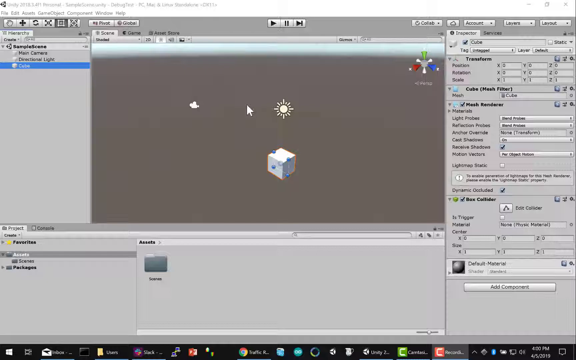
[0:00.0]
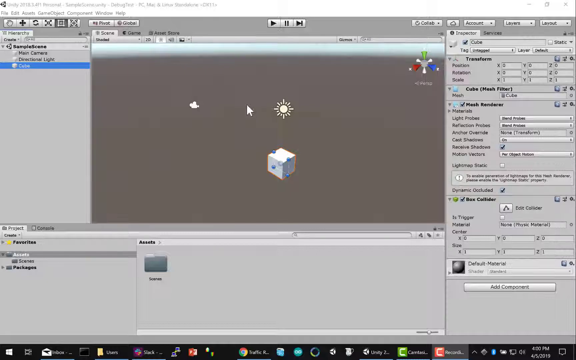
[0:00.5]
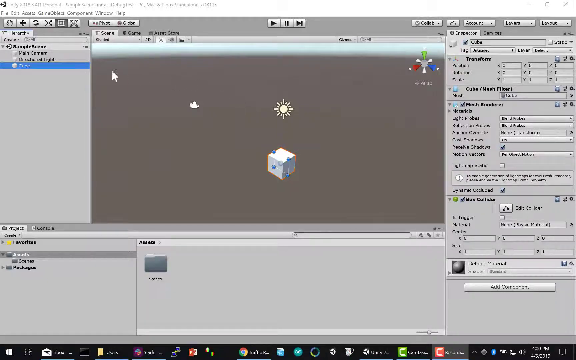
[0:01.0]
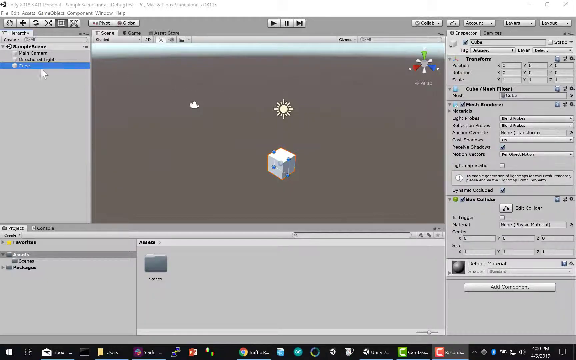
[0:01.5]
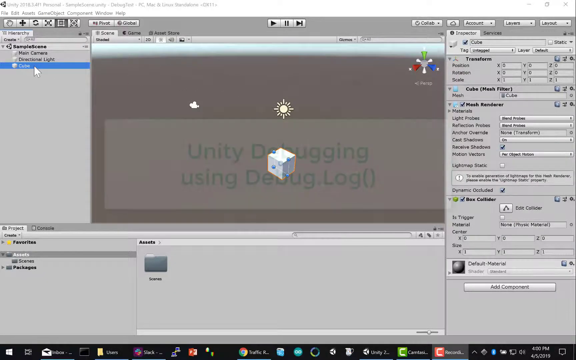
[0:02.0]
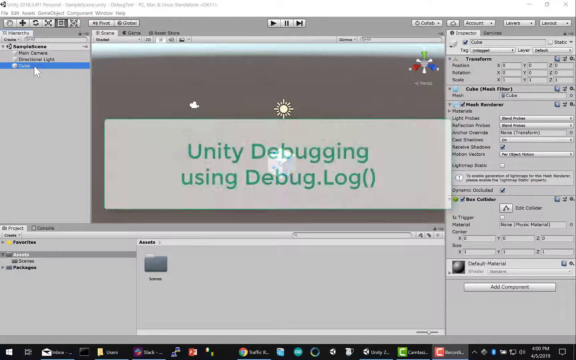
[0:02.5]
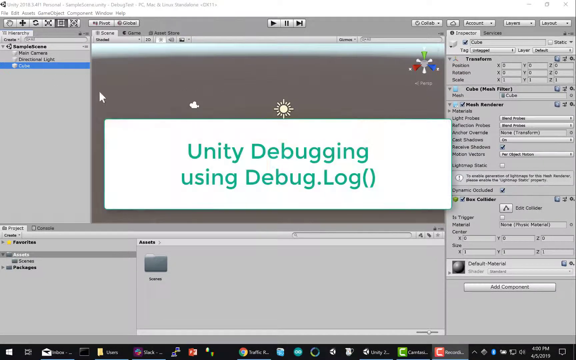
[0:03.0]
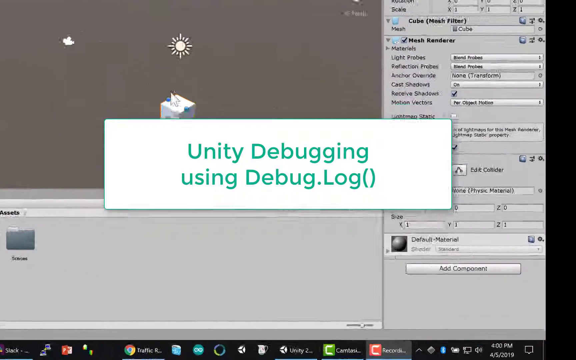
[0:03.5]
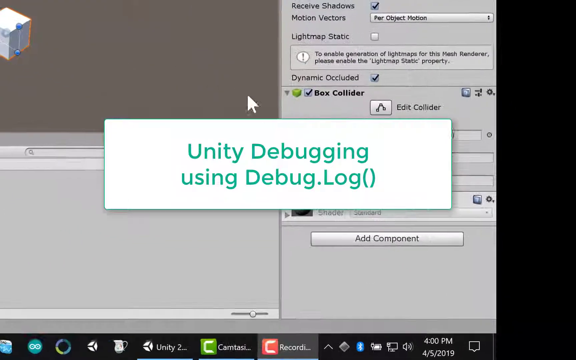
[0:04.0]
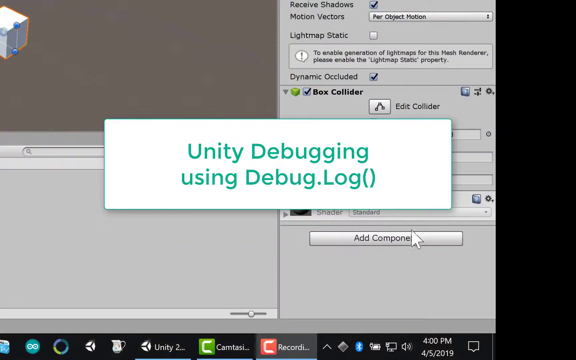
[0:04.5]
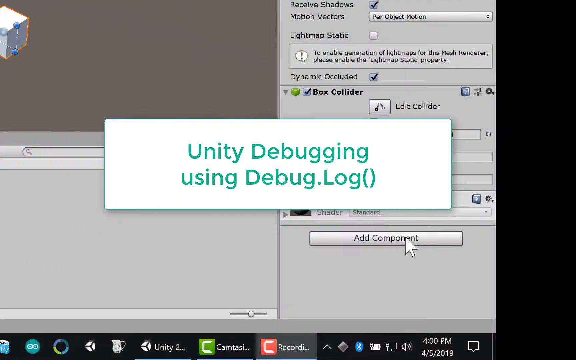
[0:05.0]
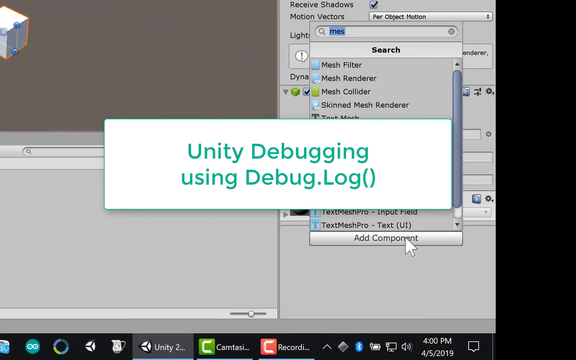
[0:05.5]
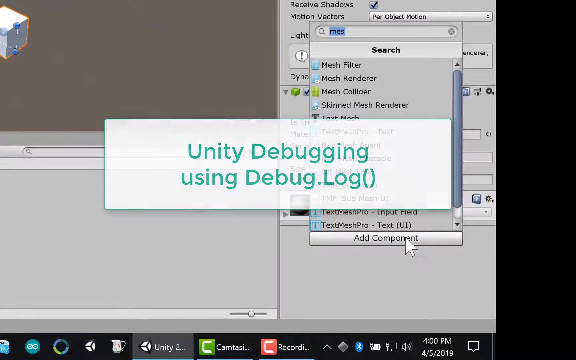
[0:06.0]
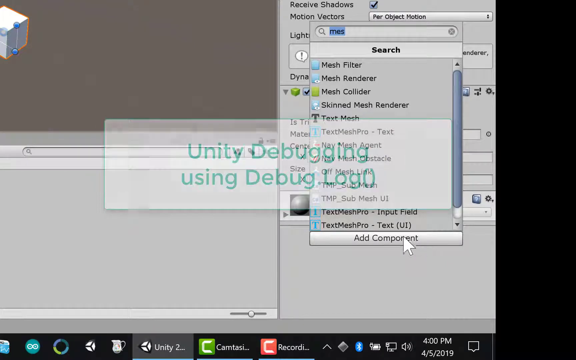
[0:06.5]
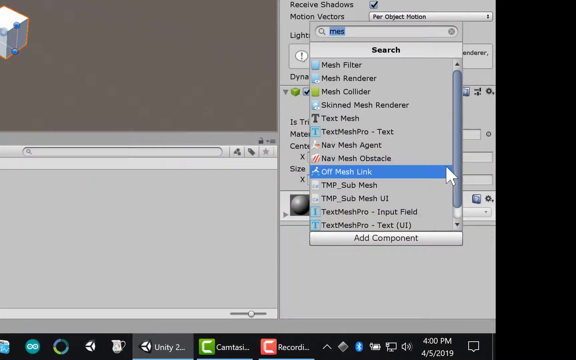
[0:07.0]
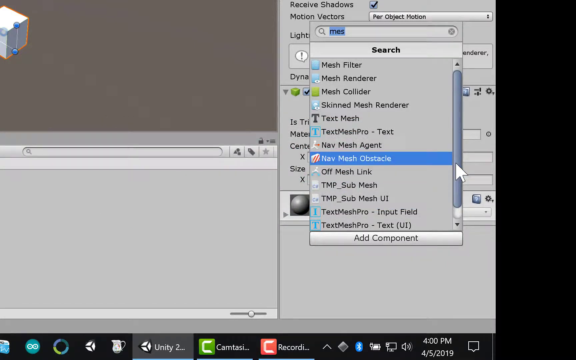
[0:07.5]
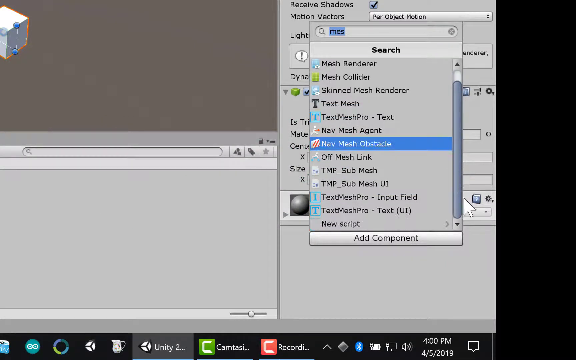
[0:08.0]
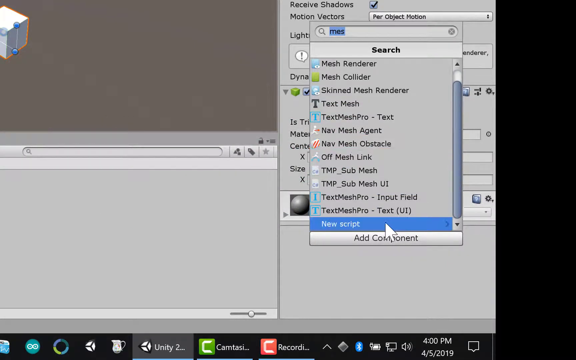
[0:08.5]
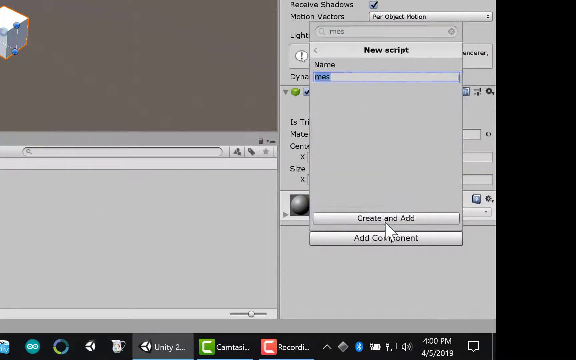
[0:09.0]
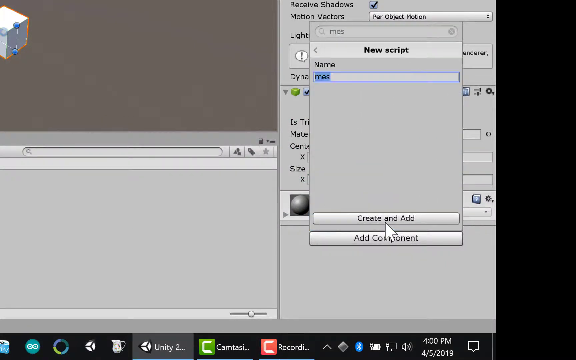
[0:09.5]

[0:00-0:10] A computer screen full of icons and items is shown. The person clicks on an icon and the text "Unity debugging using debug.log" appears. The icon seems to indicate a virus. When they click on a certain item, nothing changes on the screen.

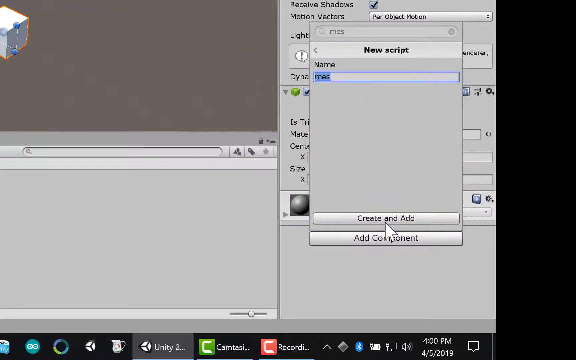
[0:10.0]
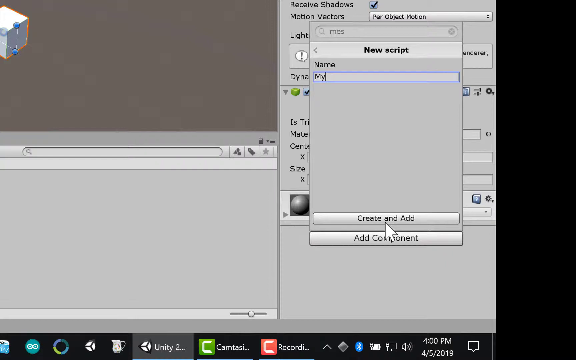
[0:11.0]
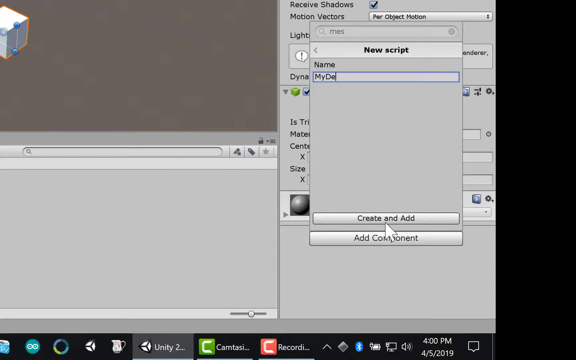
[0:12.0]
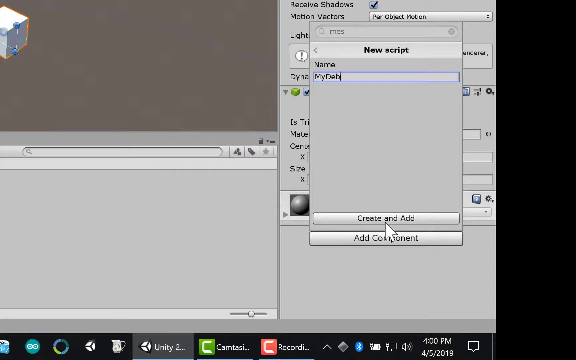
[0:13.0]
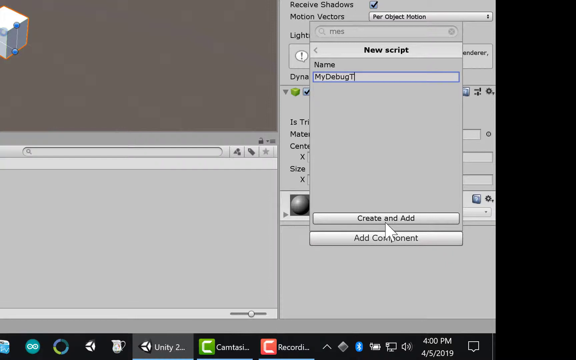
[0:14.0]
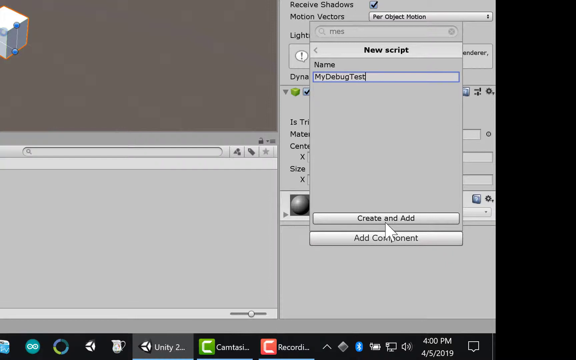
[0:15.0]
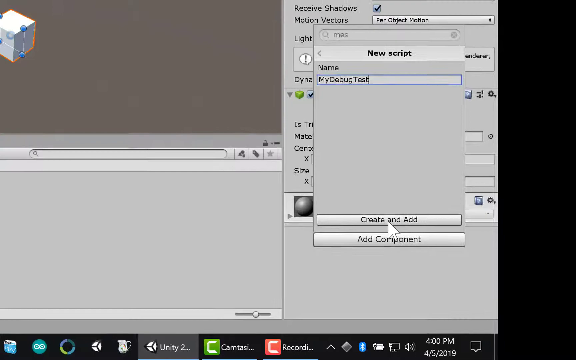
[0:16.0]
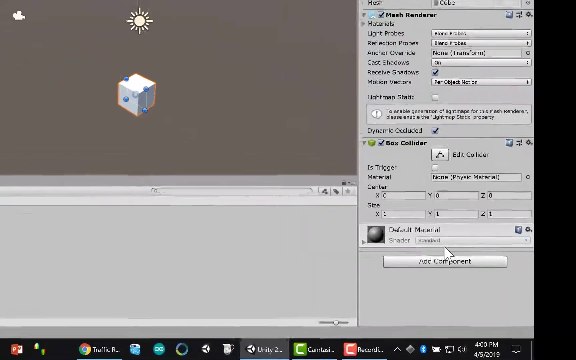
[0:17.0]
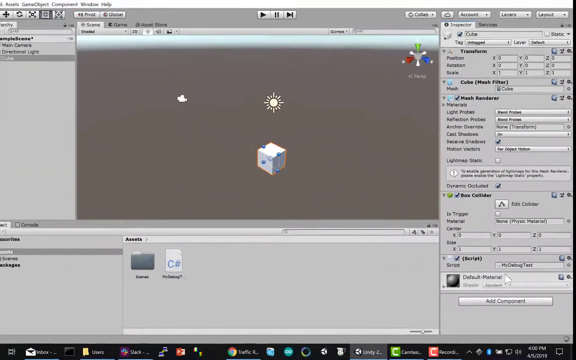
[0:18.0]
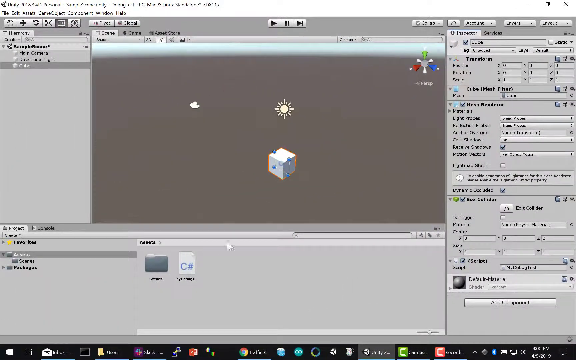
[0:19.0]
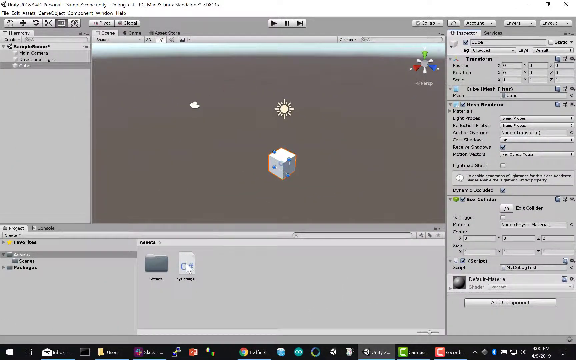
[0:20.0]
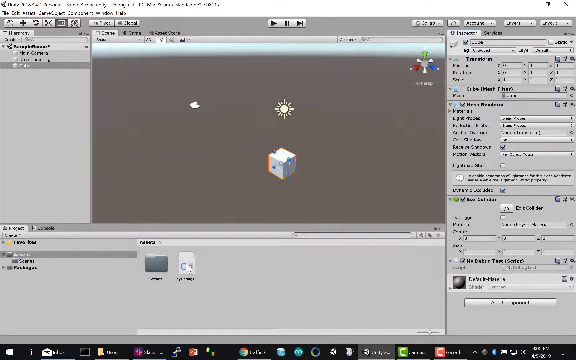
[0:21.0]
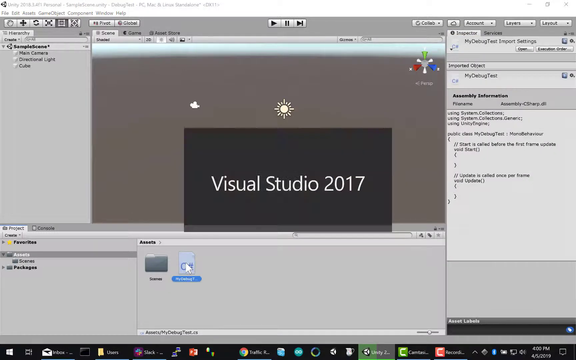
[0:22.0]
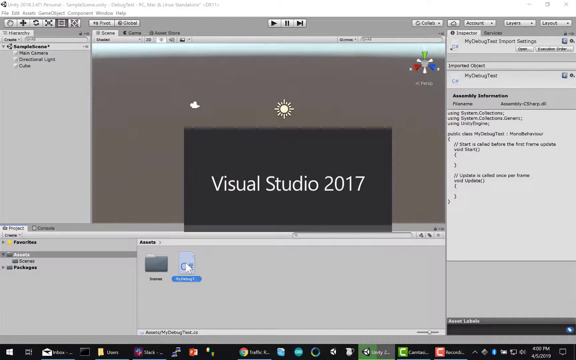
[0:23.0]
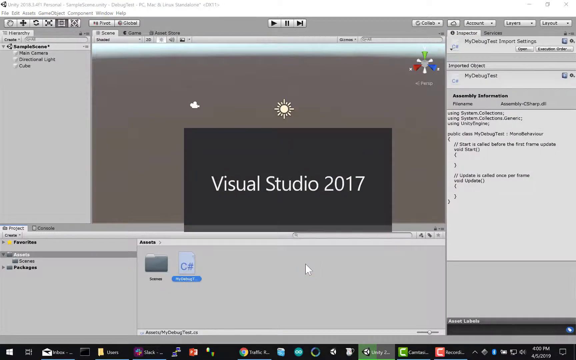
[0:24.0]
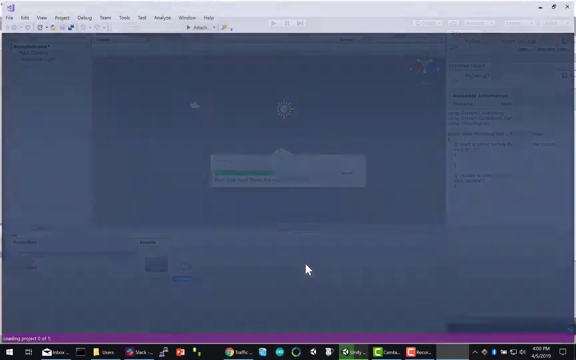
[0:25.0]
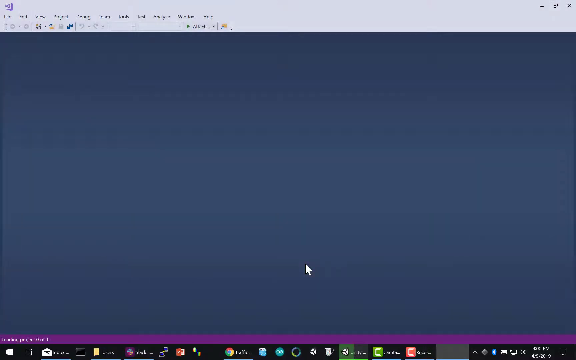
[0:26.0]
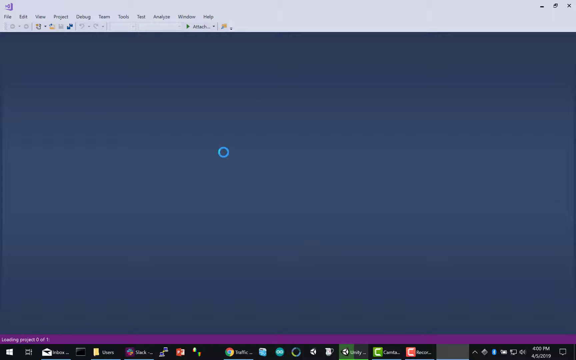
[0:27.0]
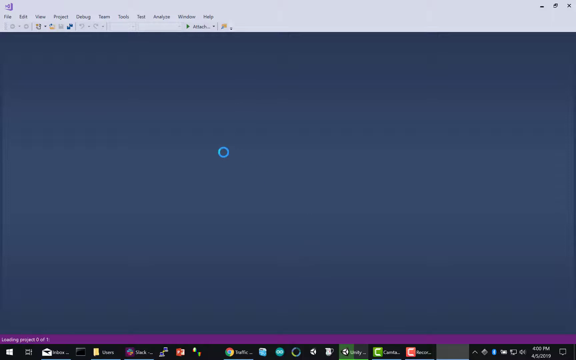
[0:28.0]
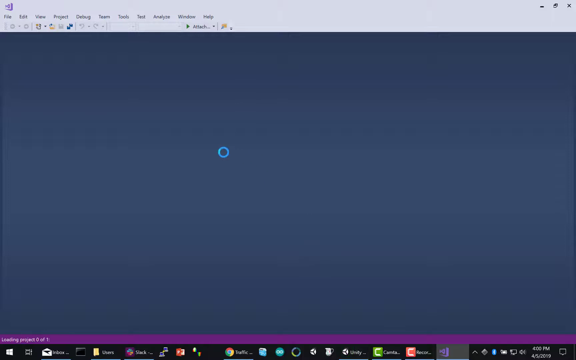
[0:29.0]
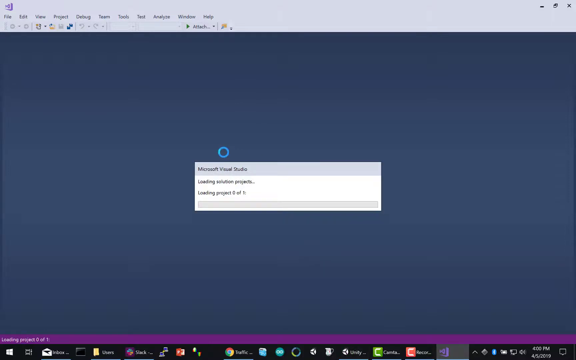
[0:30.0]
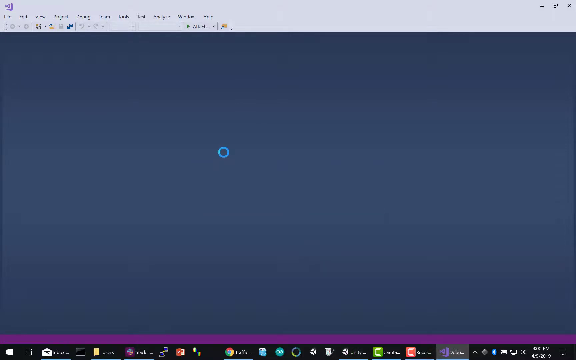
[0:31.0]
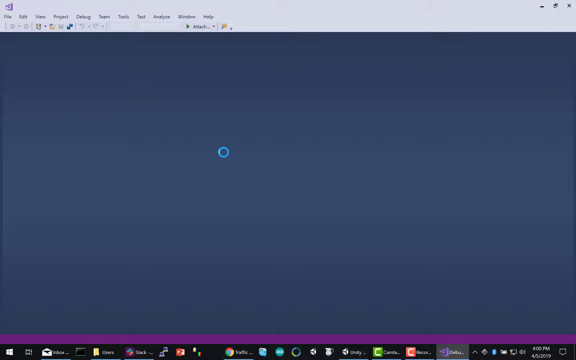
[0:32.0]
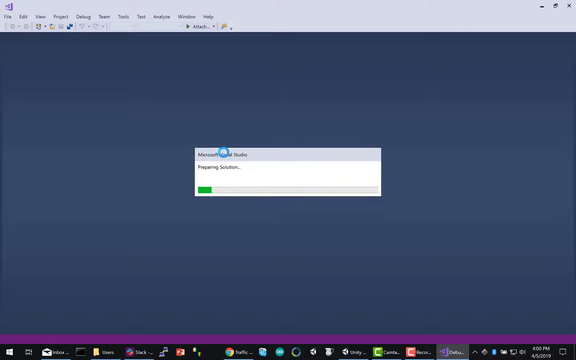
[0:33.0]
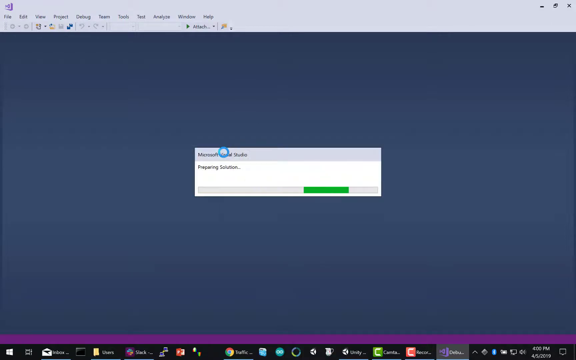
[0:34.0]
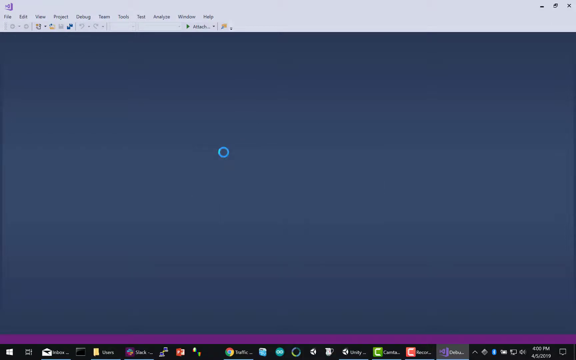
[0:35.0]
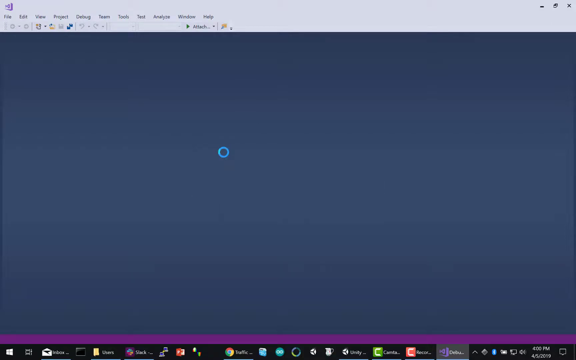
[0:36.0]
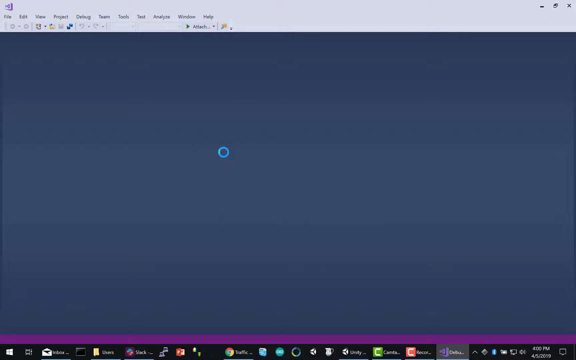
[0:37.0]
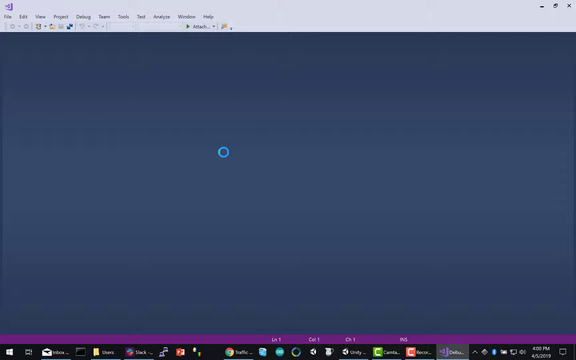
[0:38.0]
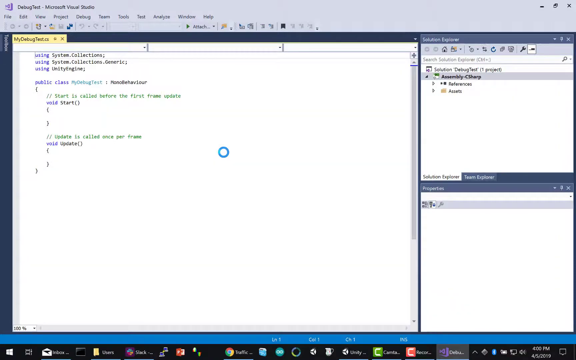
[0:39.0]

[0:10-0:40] The person seems to be setting up debugging components: they start at an icon and add components, including a debug test. The screen then shows a sign reading "Virtual Studio 07" and changes to a blue colour. Next, something appears to be downloading, with a green icon moving back and forth. A whole new page pops up with different settings.